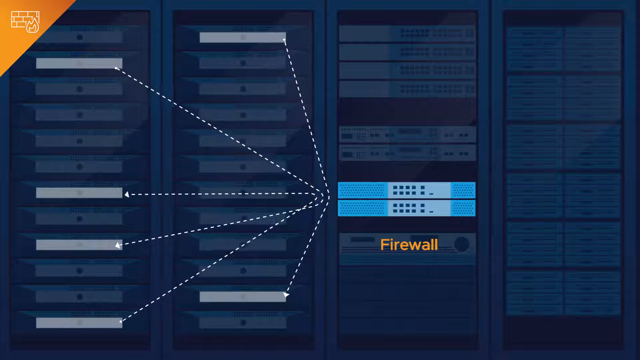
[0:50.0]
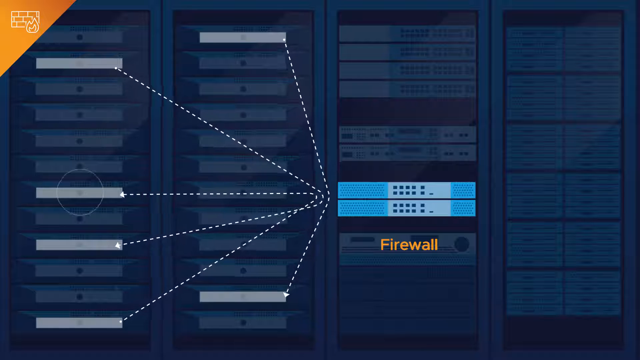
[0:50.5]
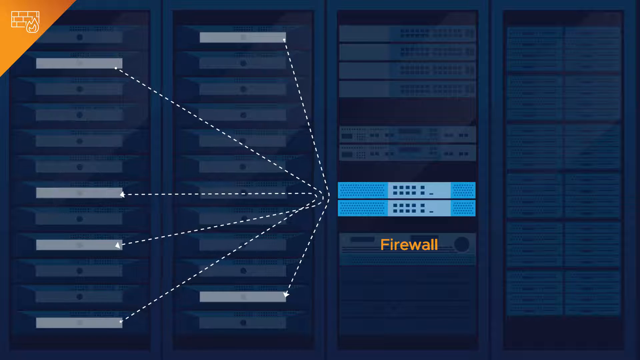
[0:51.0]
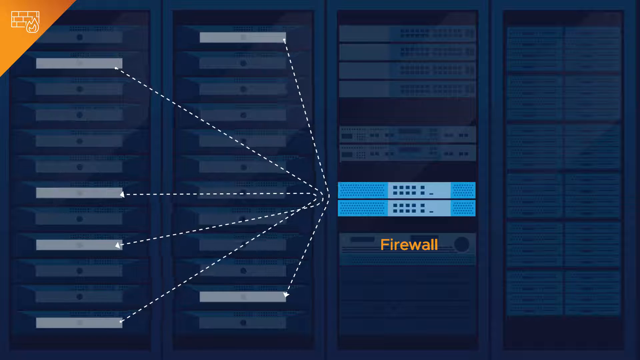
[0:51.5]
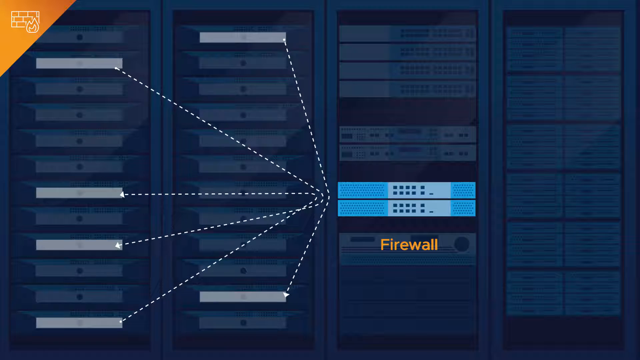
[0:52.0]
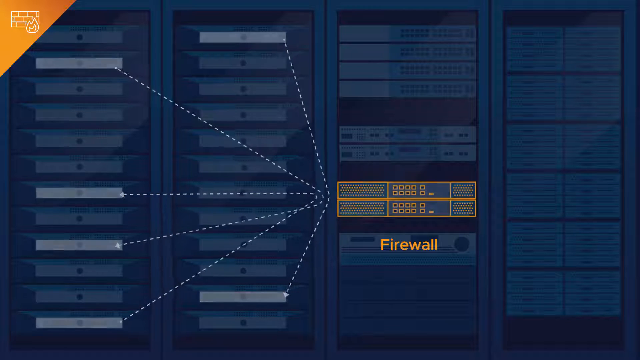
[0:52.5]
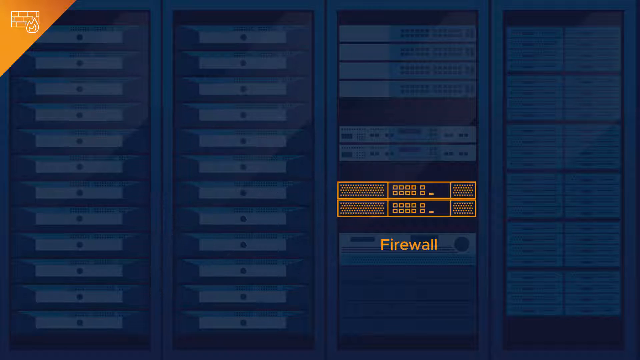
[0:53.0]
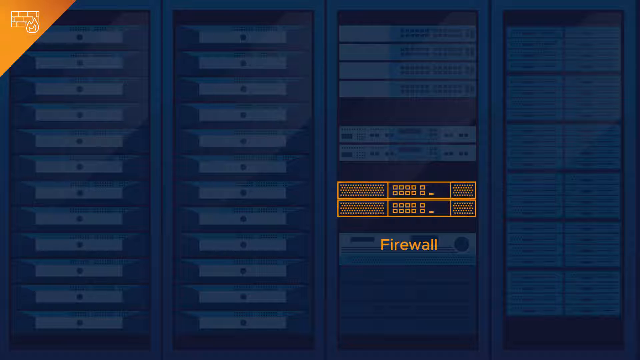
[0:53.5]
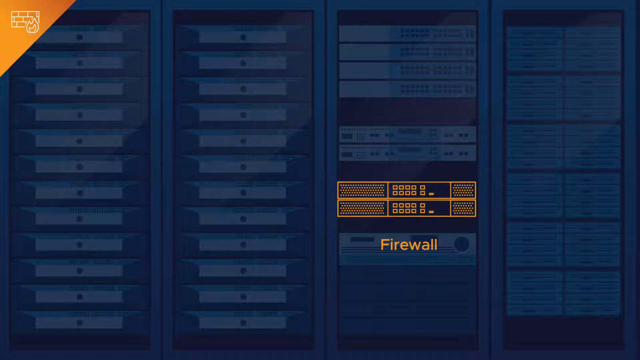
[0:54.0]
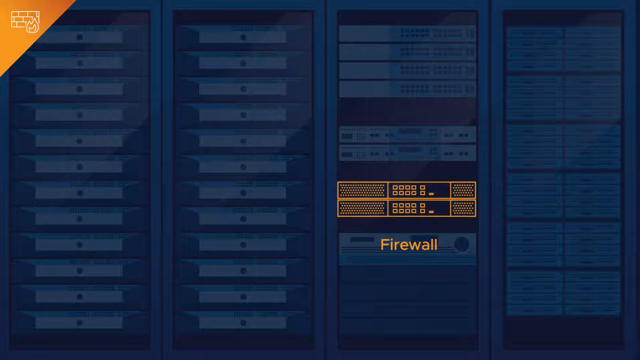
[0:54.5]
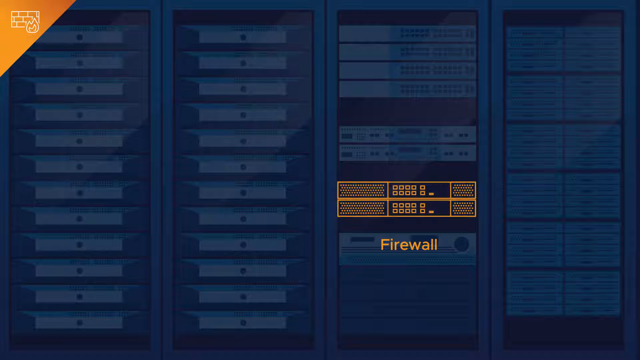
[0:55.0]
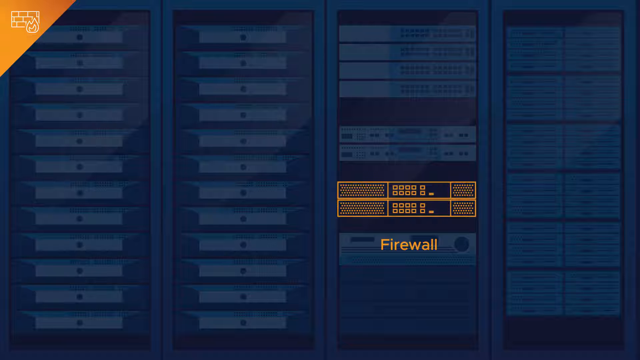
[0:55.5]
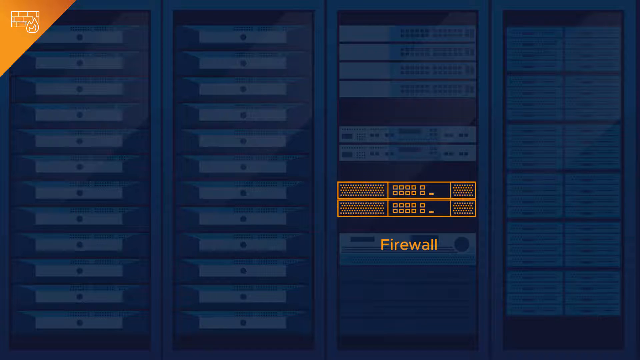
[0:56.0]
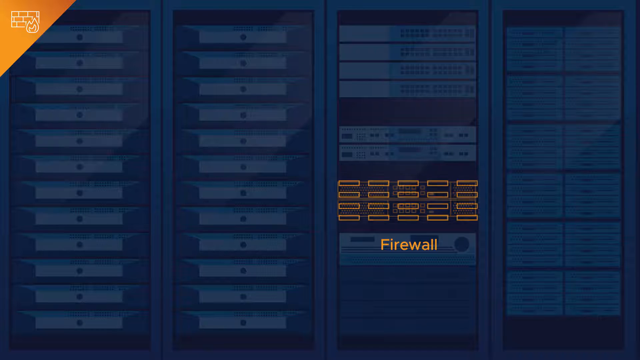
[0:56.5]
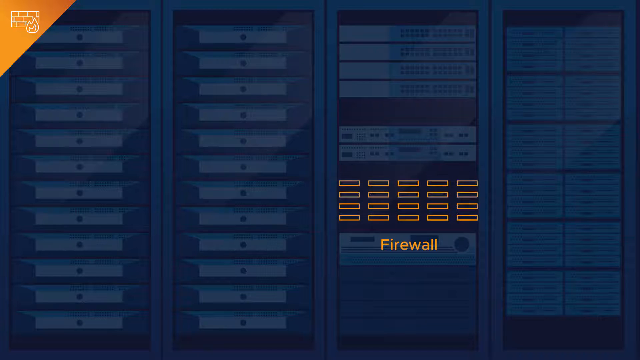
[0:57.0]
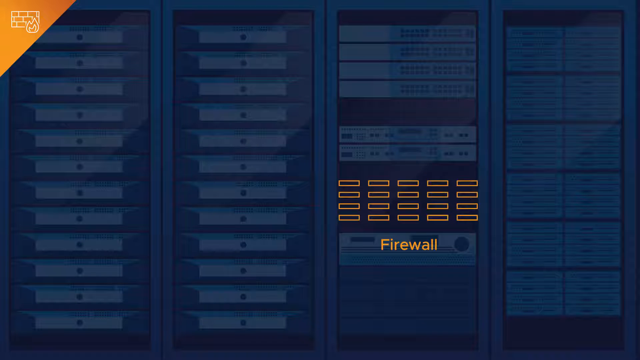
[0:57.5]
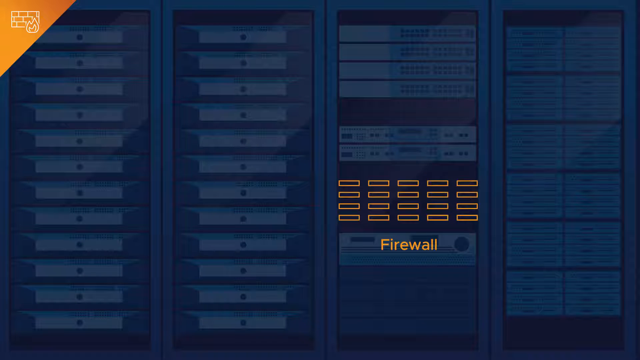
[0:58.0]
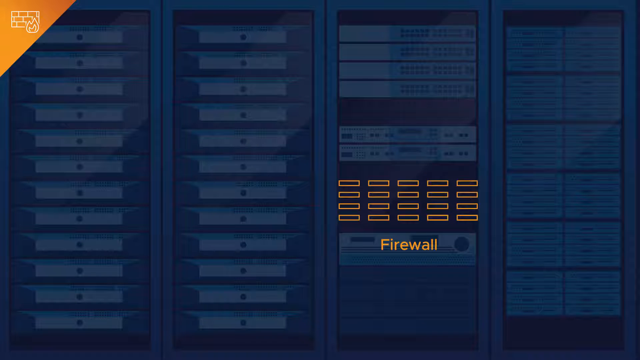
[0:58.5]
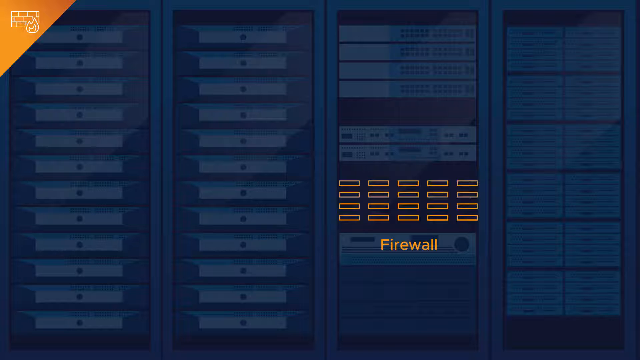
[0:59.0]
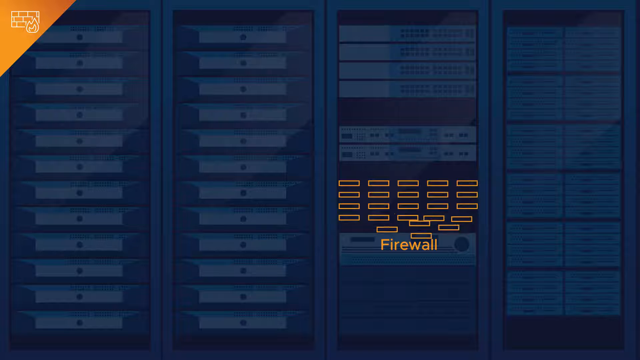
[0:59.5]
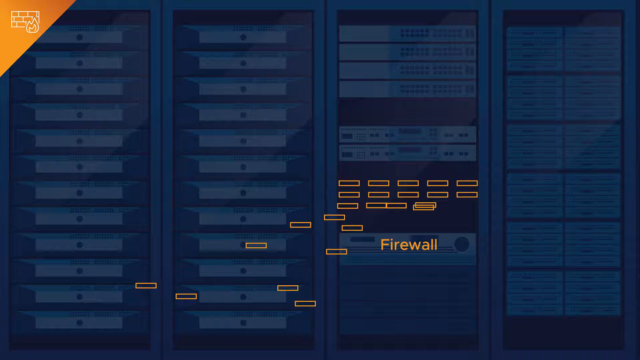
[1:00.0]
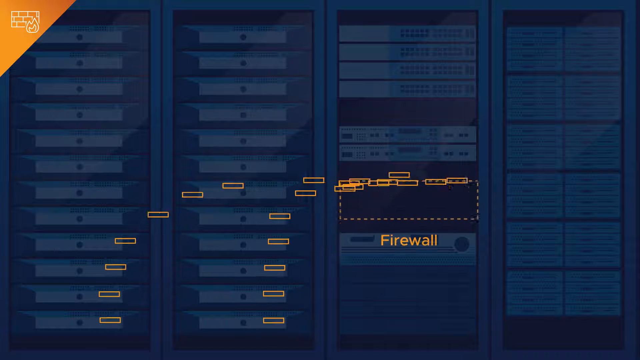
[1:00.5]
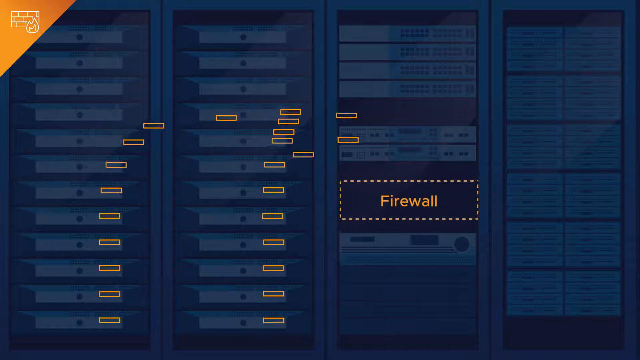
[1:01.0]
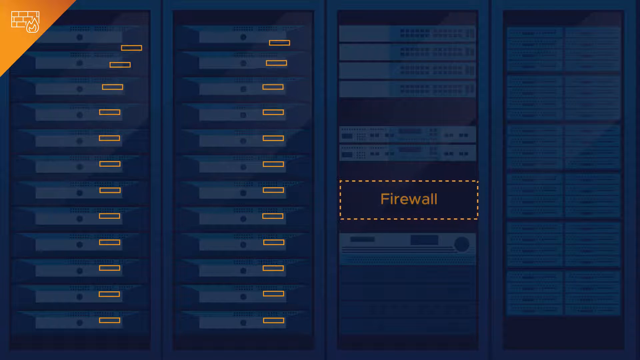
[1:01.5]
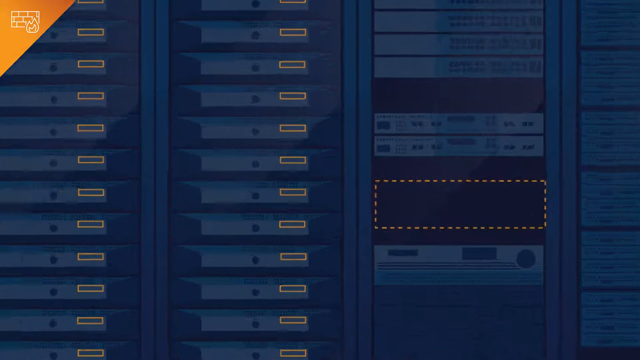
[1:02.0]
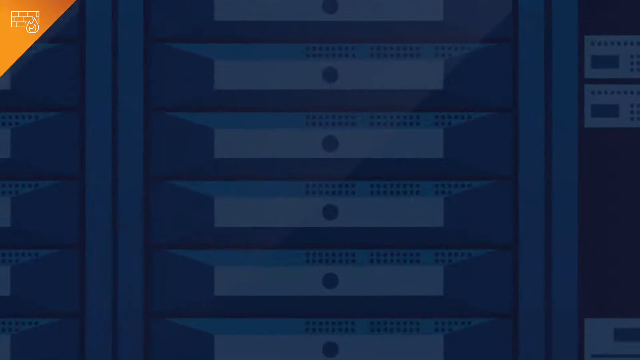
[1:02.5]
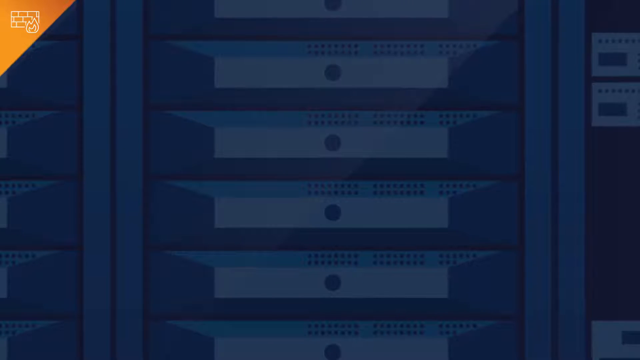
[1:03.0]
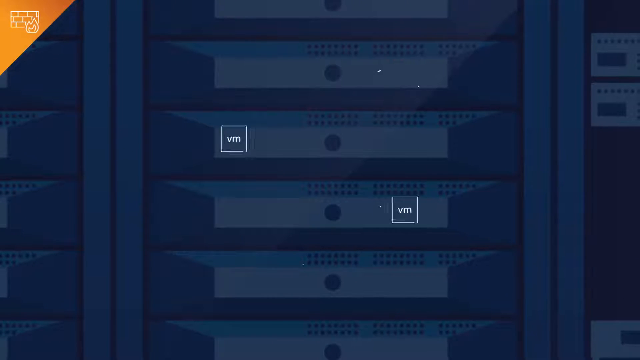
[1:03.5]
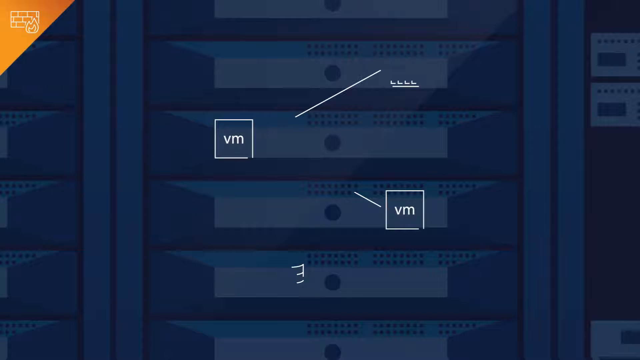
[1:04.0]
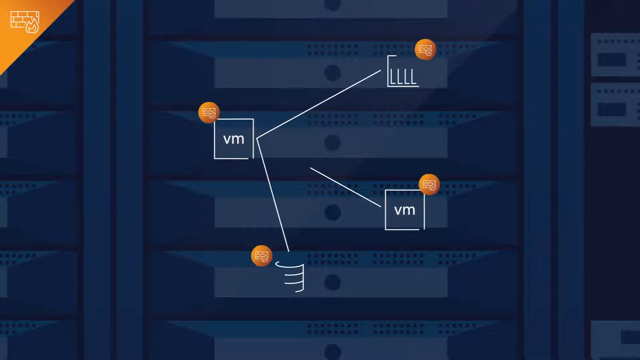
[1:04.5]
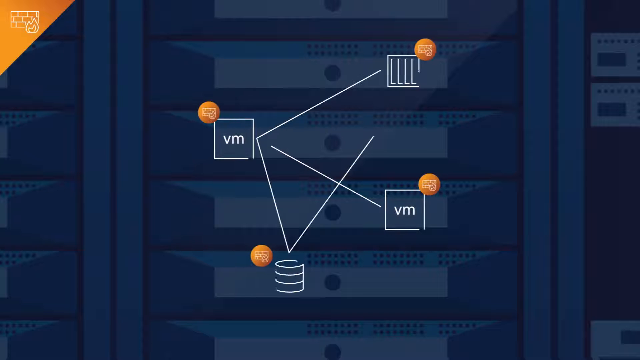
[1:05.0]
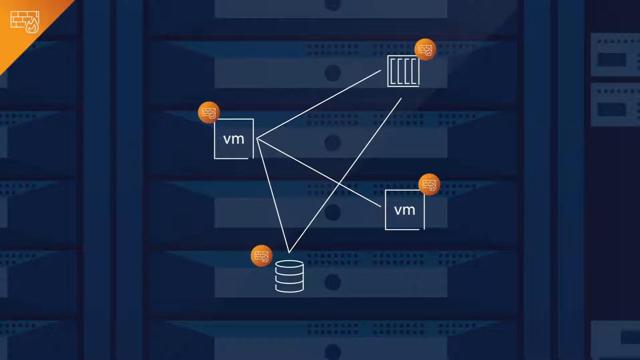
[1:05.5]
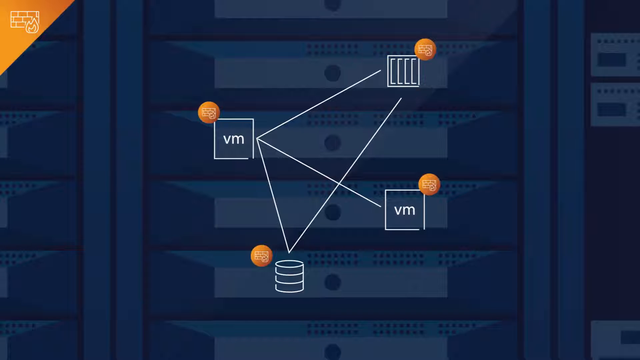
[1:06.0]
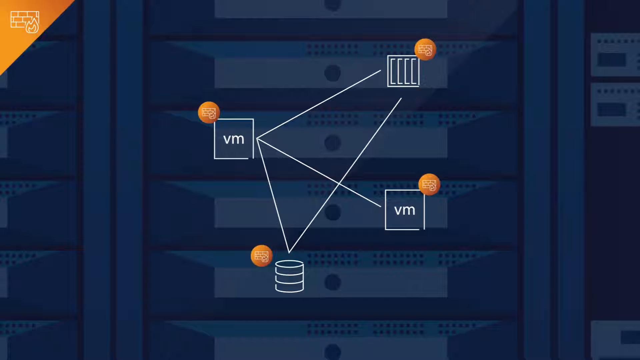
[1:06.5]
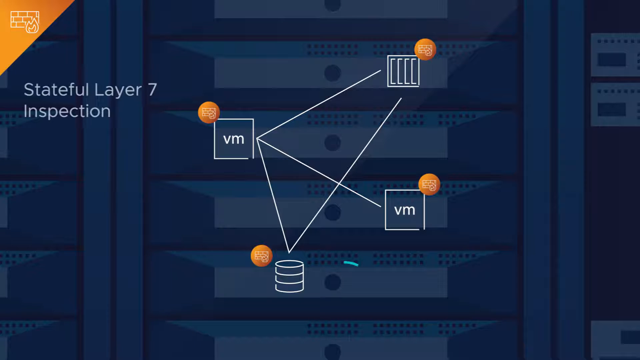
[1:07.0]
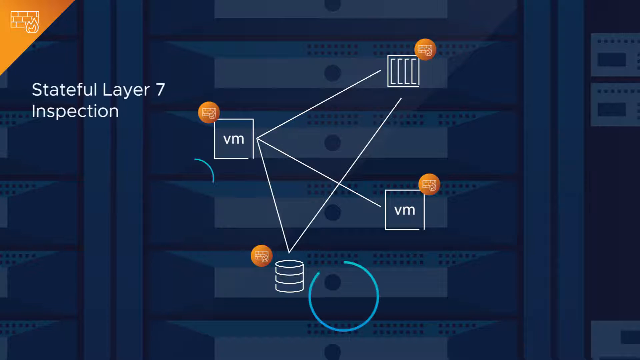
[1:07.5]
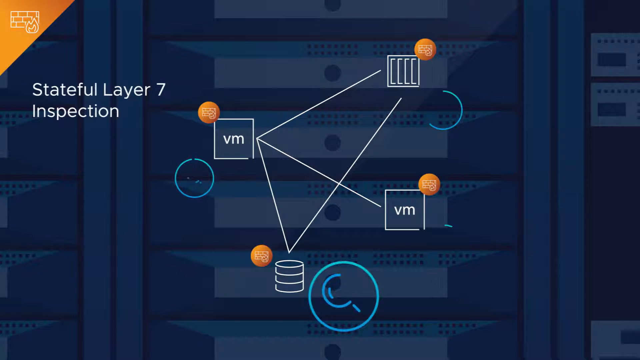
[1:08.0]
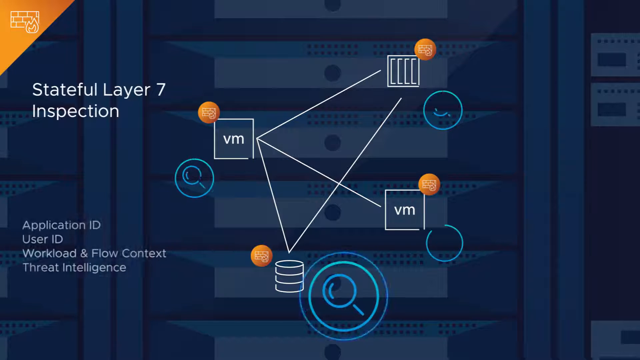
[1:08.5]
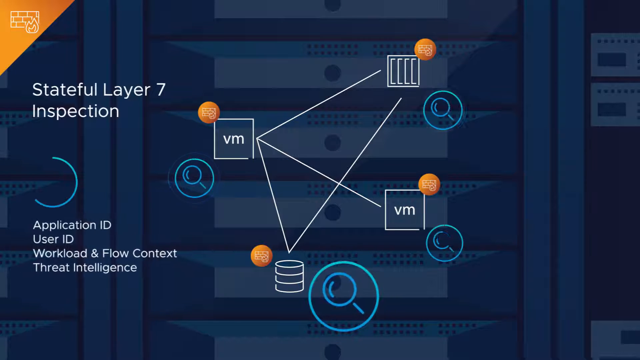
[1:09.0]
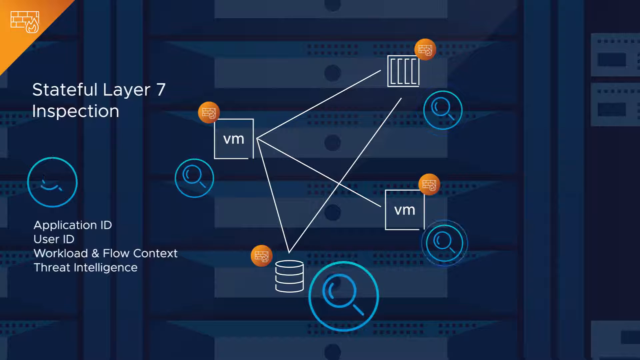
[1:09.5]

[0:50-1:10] The orange firewall and the blue server rack are on screen. In the upper left is a small orange triangle with a white interior showing a brick wall with a fire in front of it, apparently symbolizing the topic. The image pauses for about 5 to 10 seconds. Then pieces of the firewall break off into the new servers as individual little squares, and the view zooms in on four of them: two show "VM", and one has a square with a circular shape bearing the brick wall and fire logo. Text pops up reading "Stateful layer 7 inspection application ID user ID workload and flow content and threat intelligence".